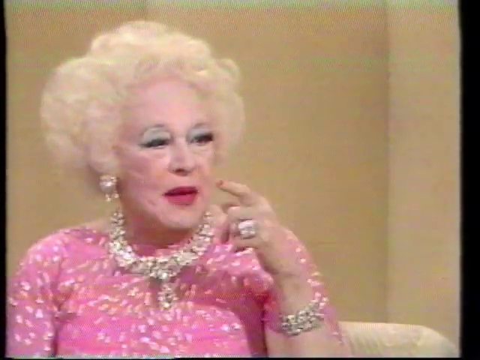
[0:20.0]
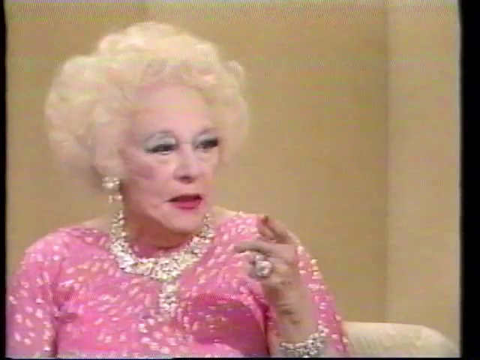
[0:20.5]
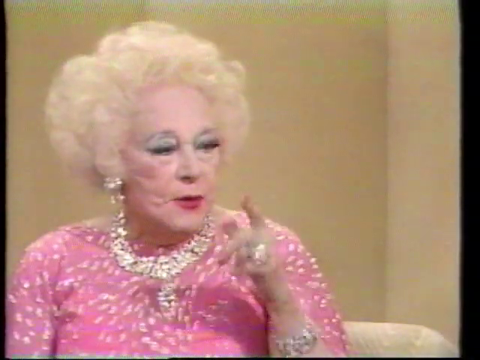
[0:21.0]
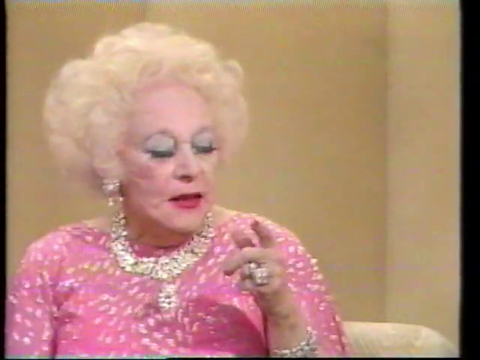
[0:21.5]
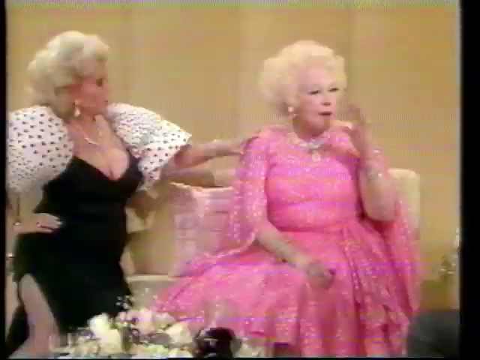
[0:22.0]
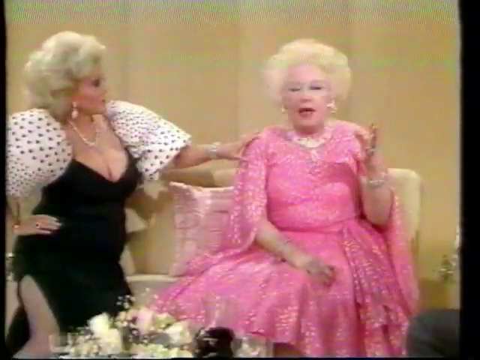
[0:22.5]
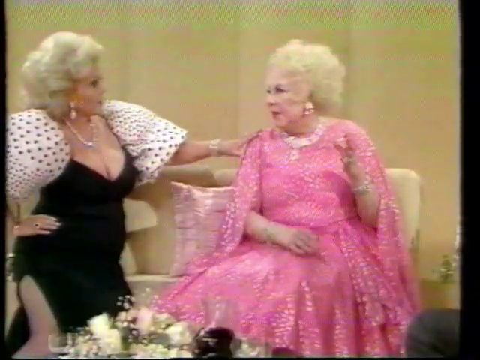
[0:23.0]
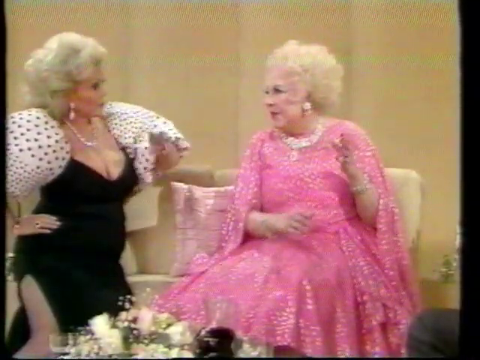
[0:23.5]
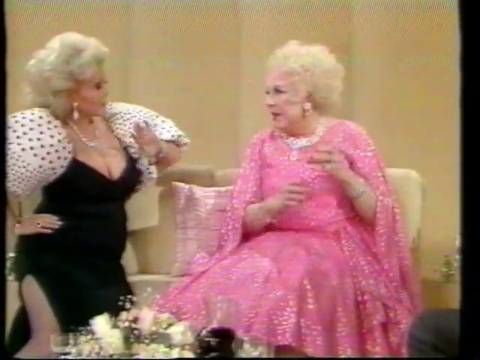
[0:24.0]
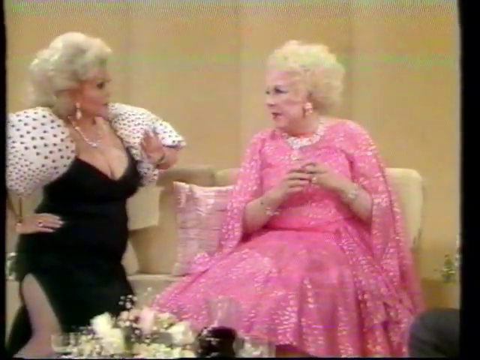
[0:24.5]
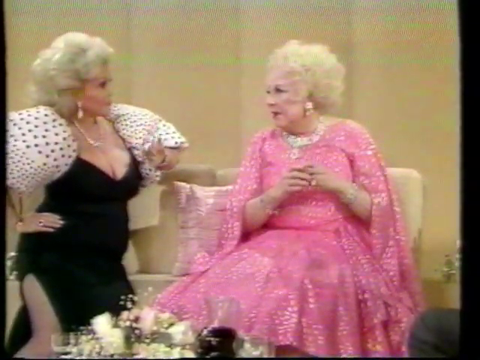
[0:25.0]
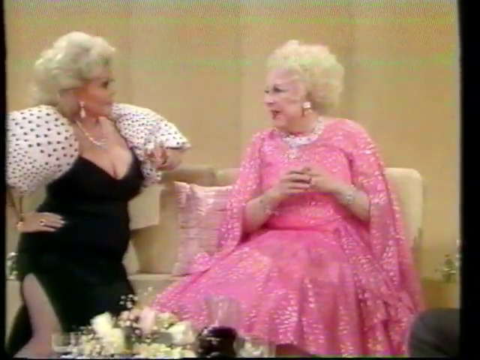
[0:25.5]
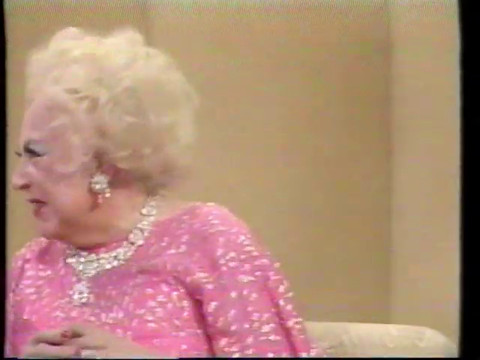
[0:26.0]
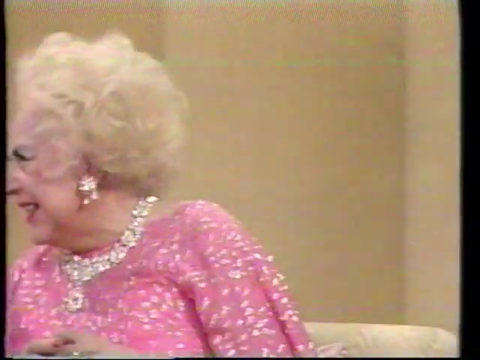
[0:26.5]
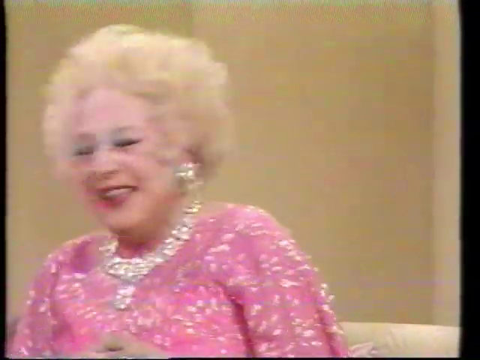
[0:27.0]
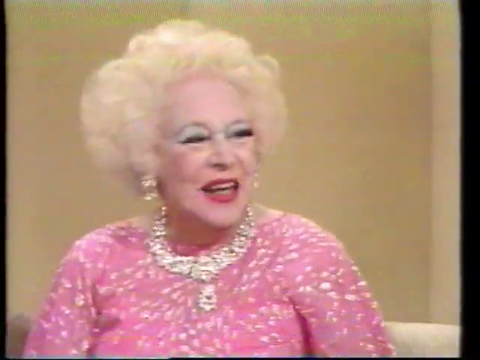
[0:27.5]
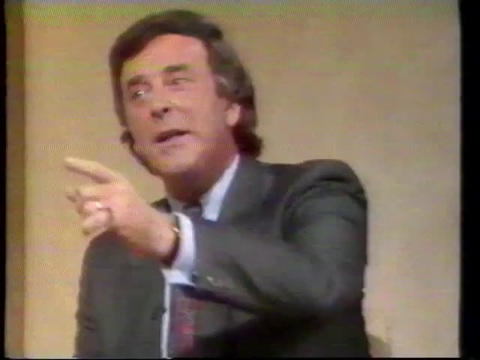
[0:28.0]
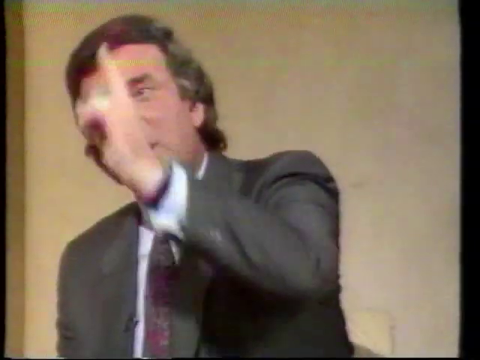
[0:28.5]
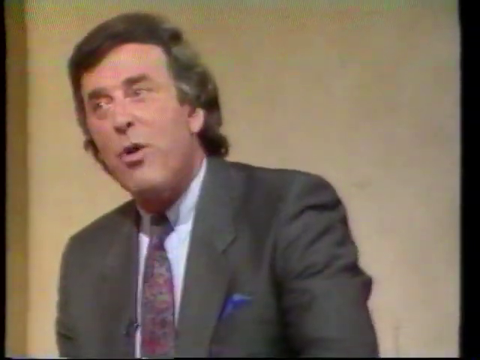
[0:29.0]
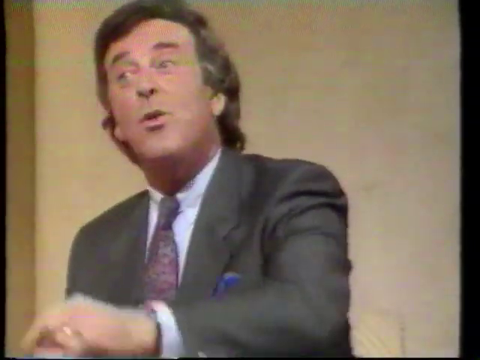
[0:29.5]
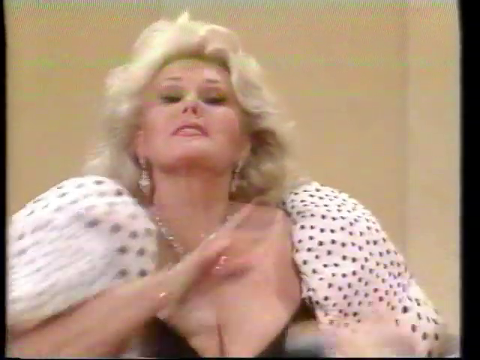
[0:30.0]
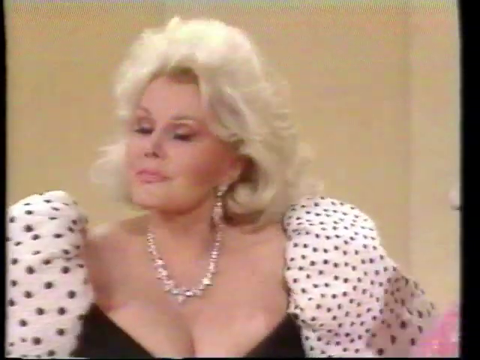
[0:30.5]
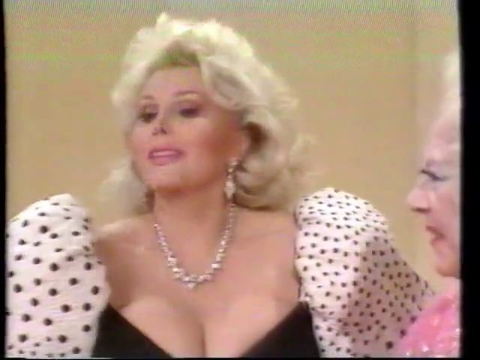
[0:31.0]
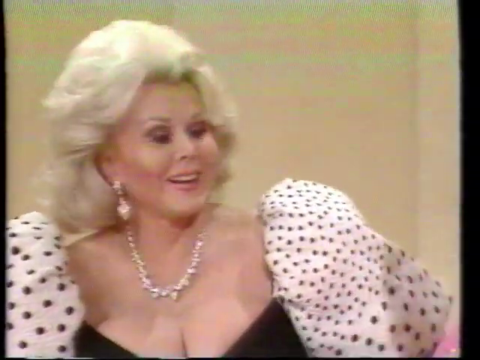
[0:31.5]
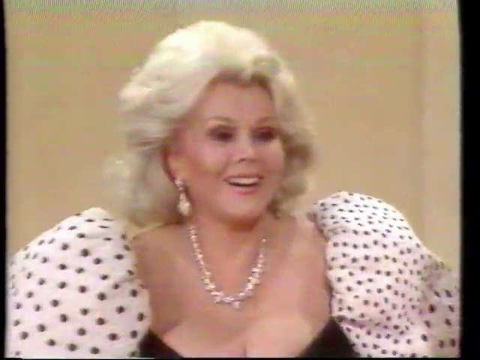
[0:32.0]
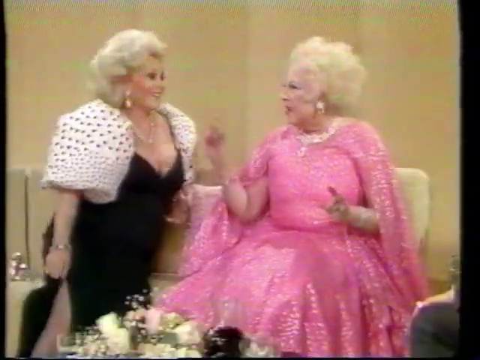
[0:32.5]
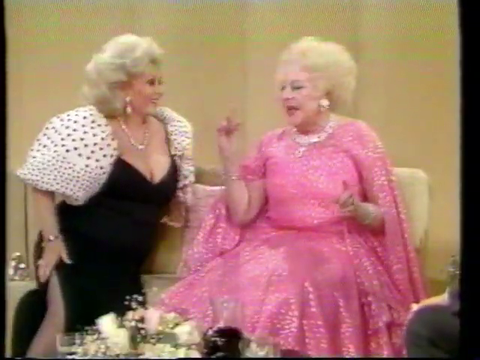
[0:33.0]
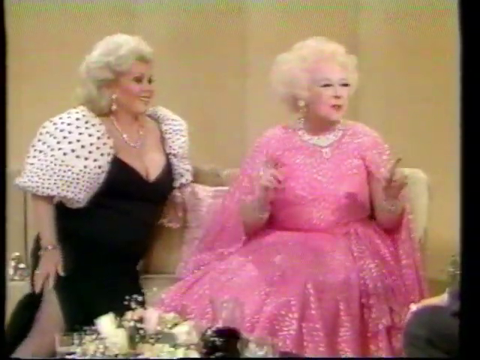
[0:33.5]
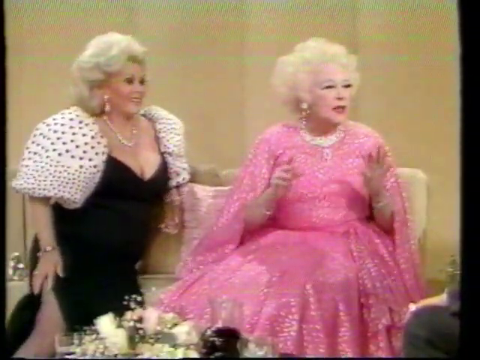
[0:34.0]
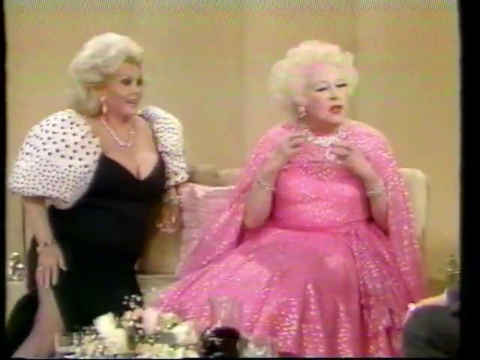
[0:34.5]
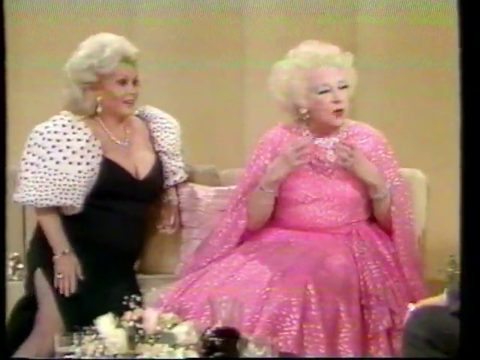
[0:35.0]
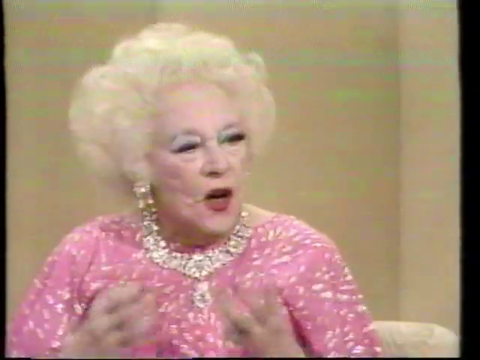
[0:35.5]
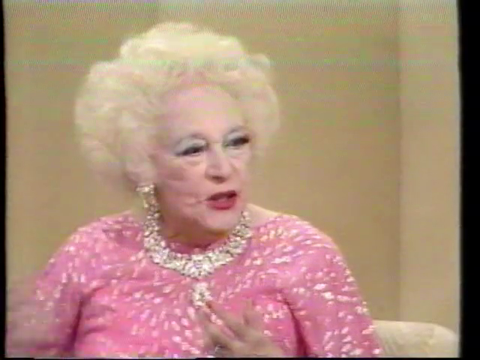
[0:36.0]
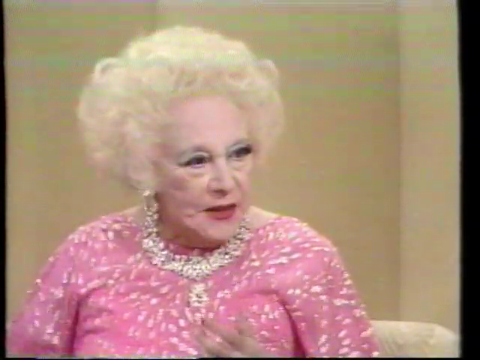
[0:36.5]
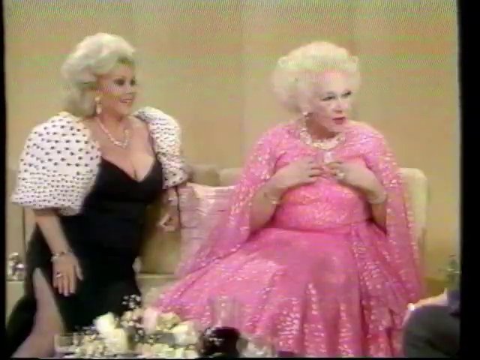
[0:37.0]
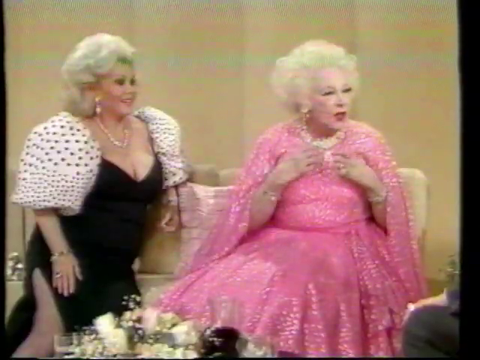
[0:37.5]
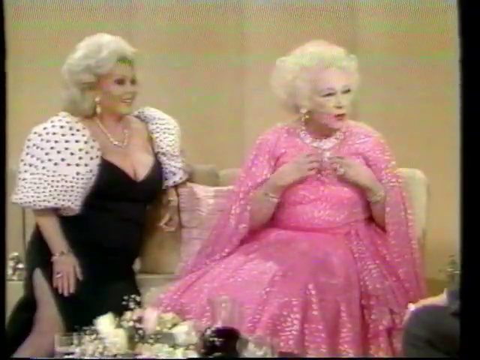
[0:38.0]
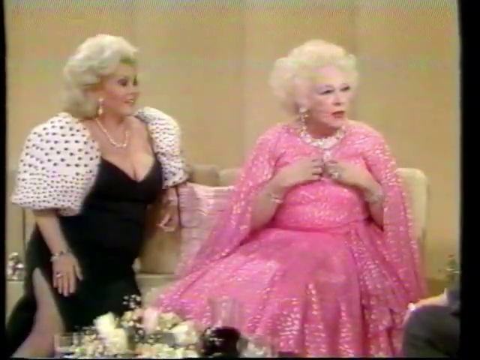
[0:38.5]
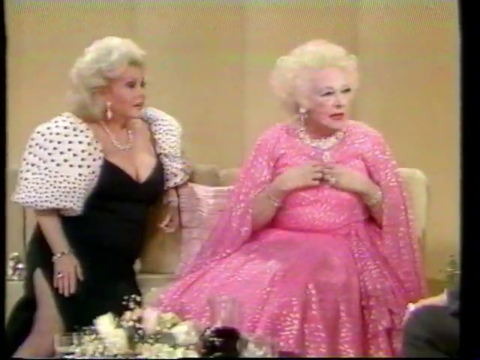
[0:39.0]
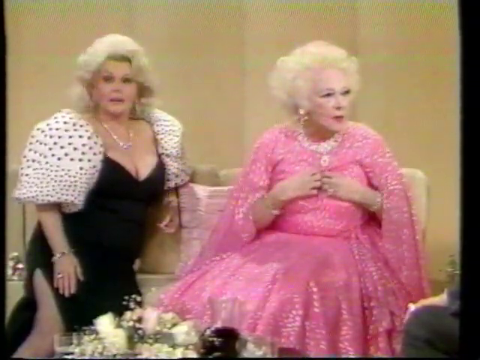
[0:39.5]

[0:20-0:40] The woman in pink, wearing a lot of diamond jewellery, keeps making motions with her left hand, index finger outstretched. She then opens her palms completely, and the camera zooms out to show the woman on the left, in black and white polka dots, placing her left hand on the right shoulder of the woman in pink, who is sitting to her right on a sofa. The woman in pink turns towards the left side of the screen, looking at the woman who placed her hand on her, as she retracts her hand, speaking and gesturing with her left. The camera zooms in once again, flashes are shown, and she looks towards the woman on her left and smiles, laughing. The shot returns to the man with long curly hair, in a grey suit with a red tie, who speaks very animatedly towards the camera, making large gestures with his left hand. The camera then goes back to the polka dot woman, zoomed in, talking to the man; she also wears large amounts of jewellery and gestures with her right hand. She gets up slightly from where she is sitting, readjusts and sits back down, and both women are shown speaking to the man and gesturing with their hands. The woman in pink speaks again, pointing both index fingers towards her chest.